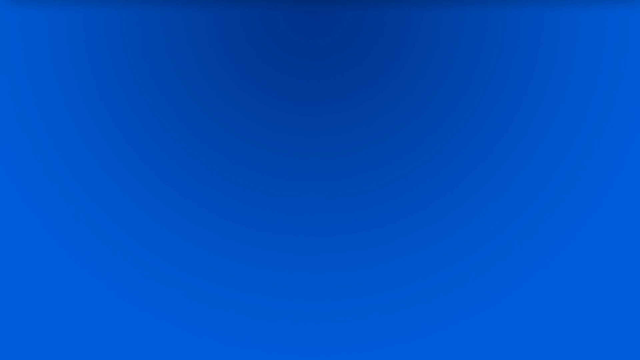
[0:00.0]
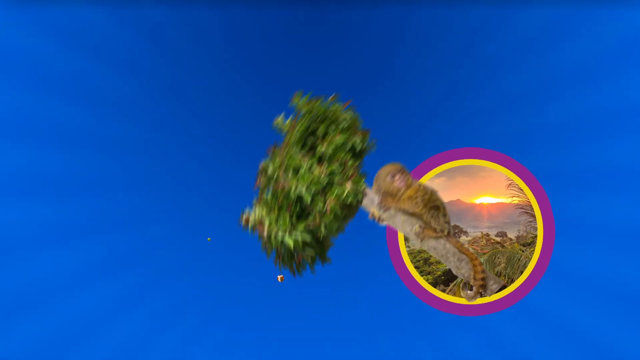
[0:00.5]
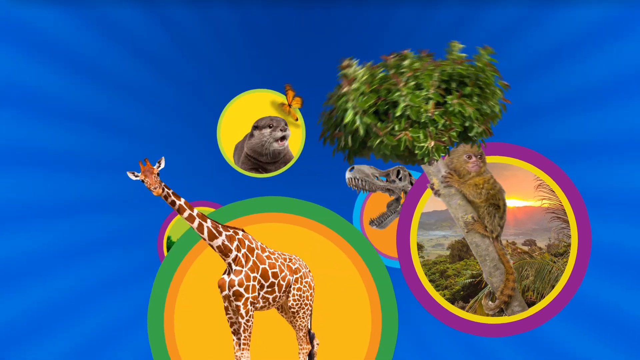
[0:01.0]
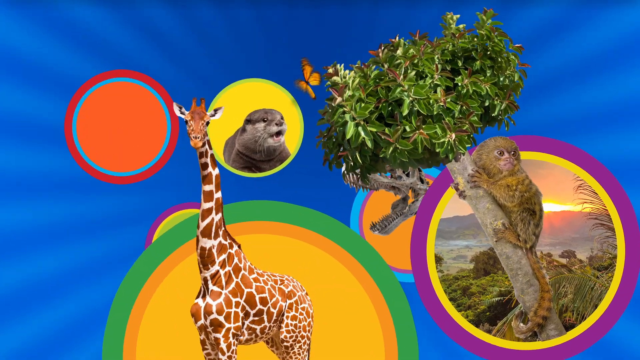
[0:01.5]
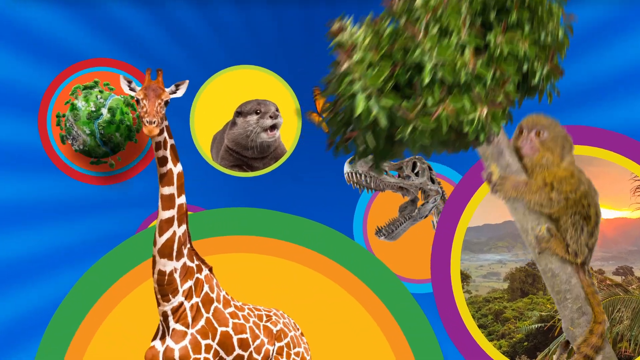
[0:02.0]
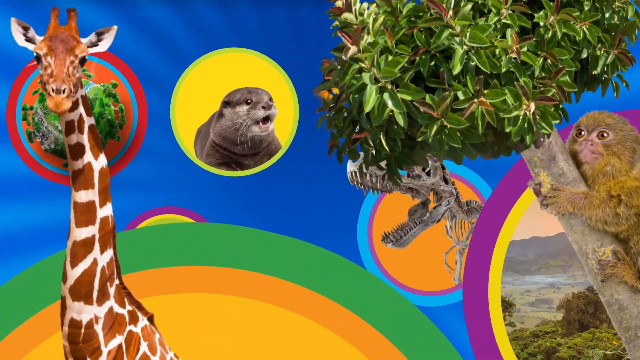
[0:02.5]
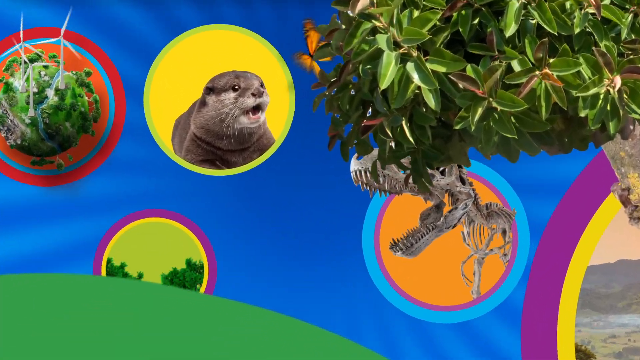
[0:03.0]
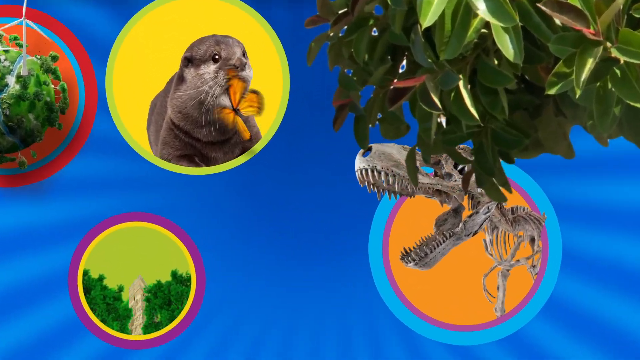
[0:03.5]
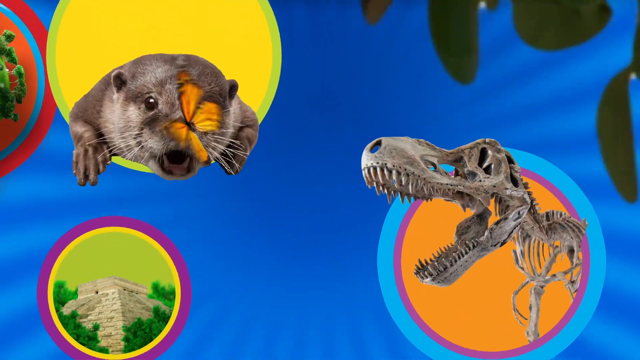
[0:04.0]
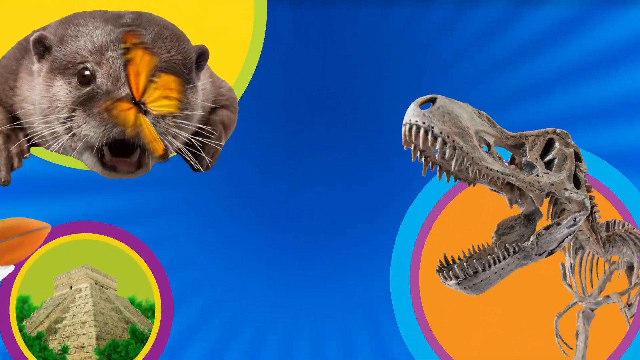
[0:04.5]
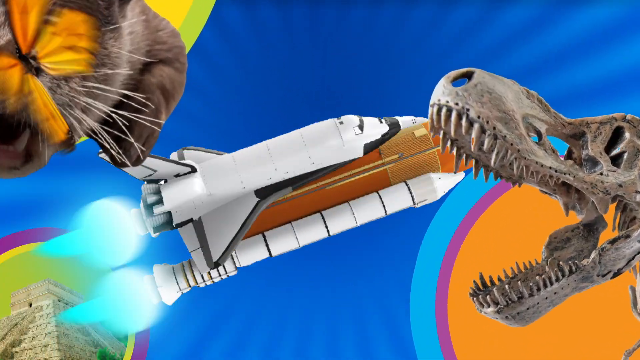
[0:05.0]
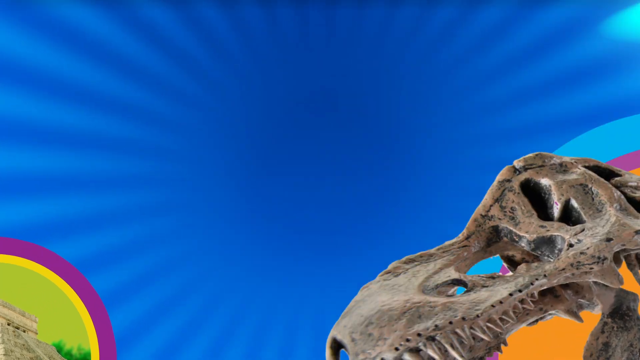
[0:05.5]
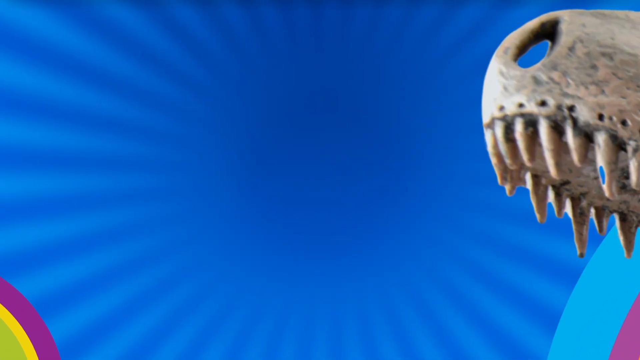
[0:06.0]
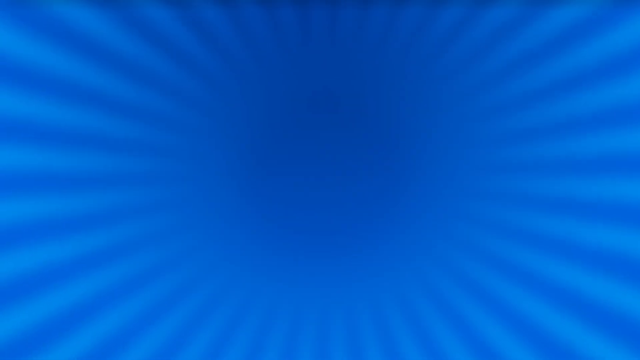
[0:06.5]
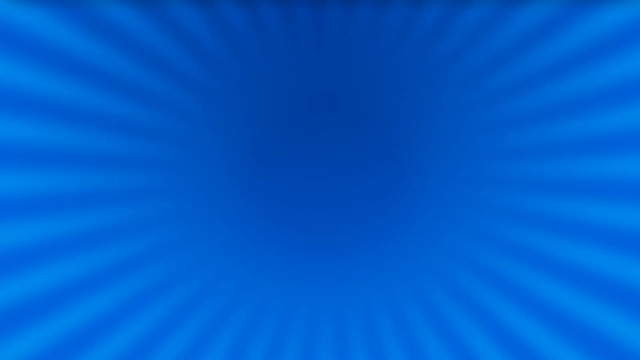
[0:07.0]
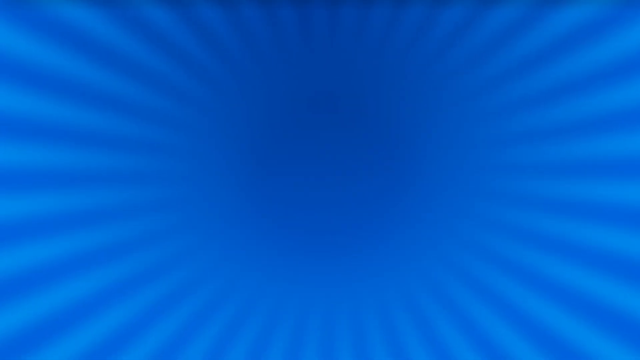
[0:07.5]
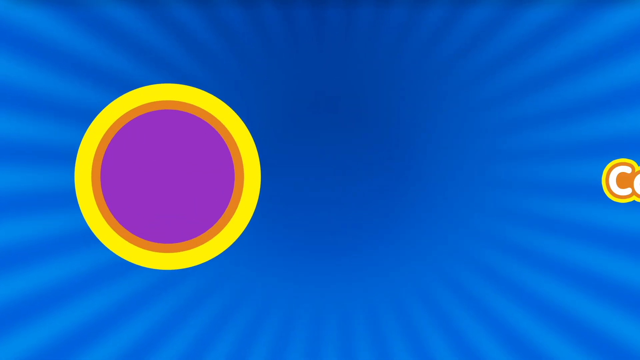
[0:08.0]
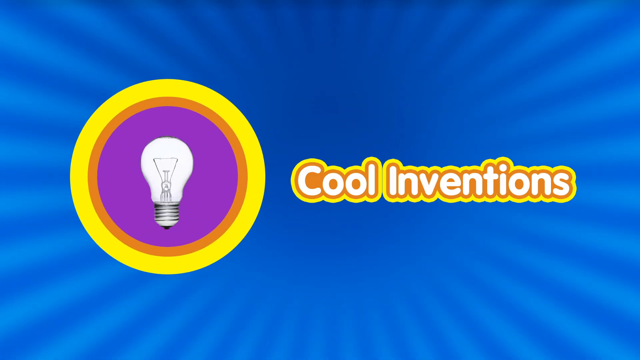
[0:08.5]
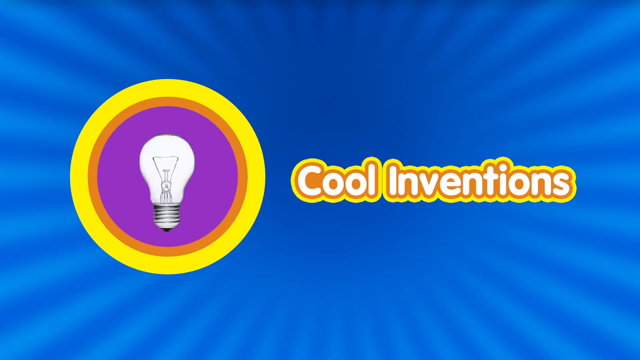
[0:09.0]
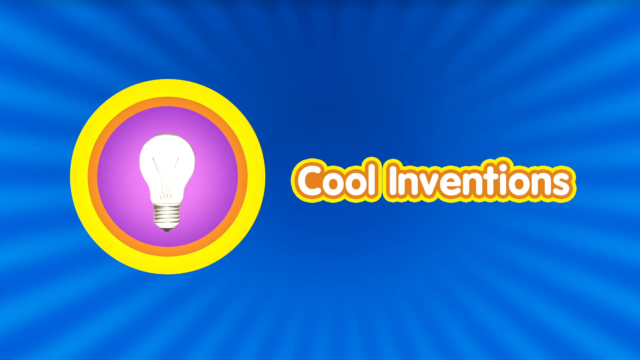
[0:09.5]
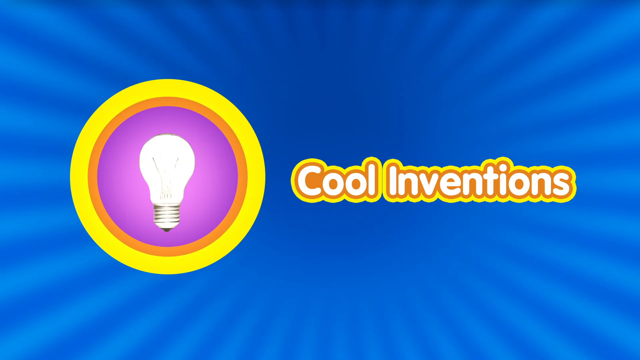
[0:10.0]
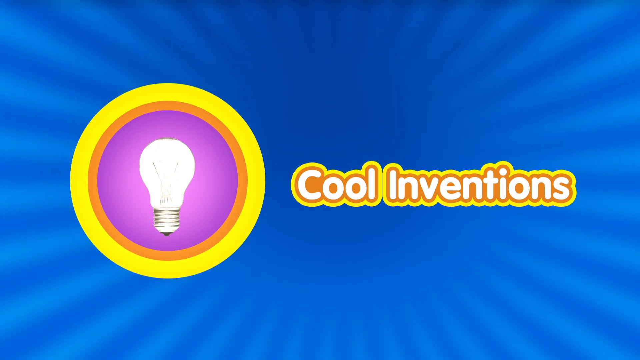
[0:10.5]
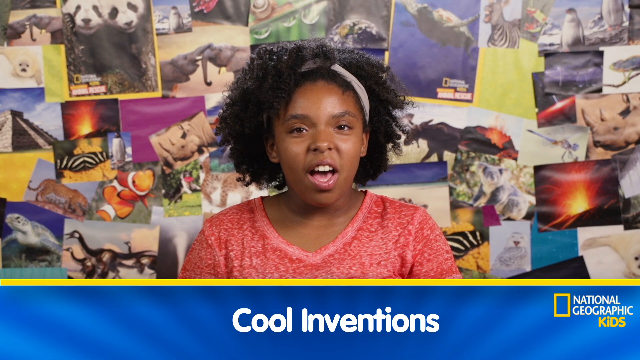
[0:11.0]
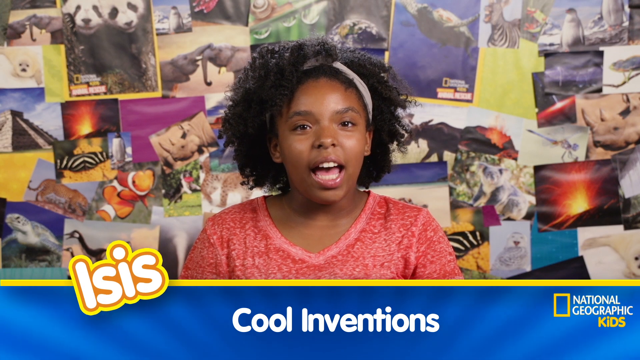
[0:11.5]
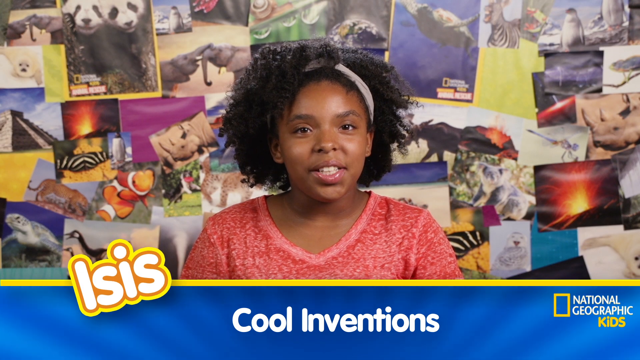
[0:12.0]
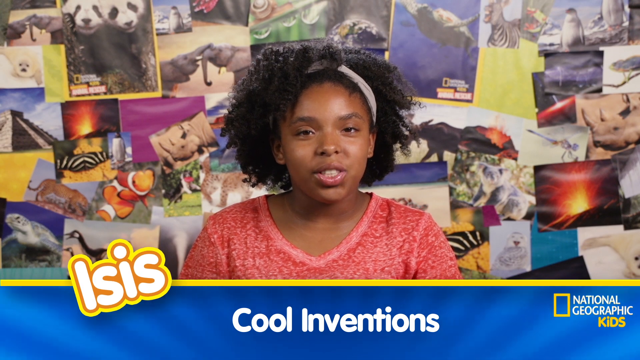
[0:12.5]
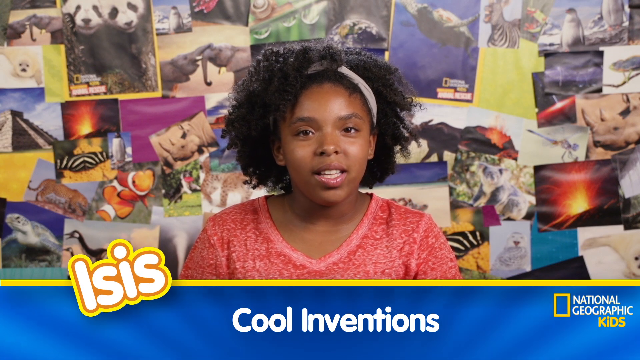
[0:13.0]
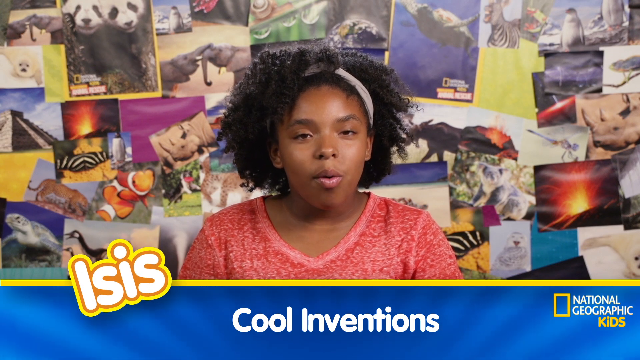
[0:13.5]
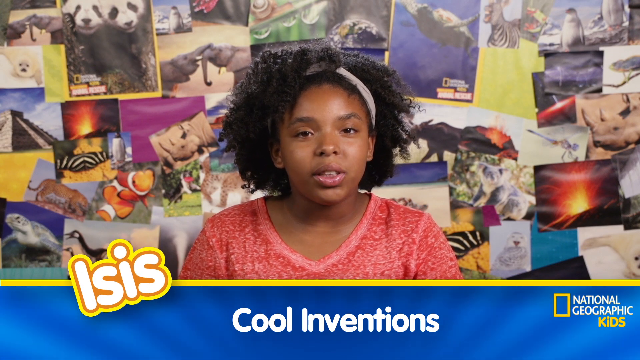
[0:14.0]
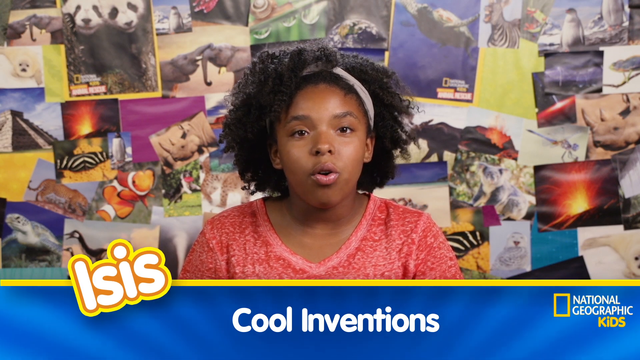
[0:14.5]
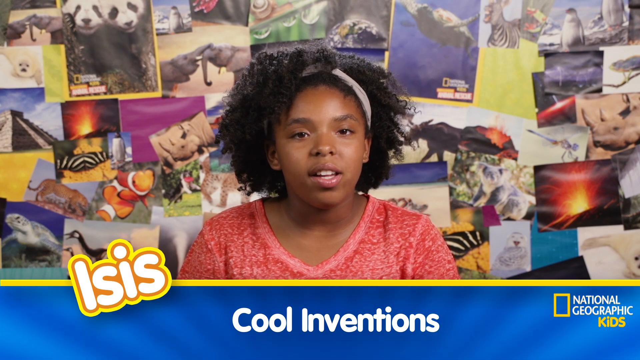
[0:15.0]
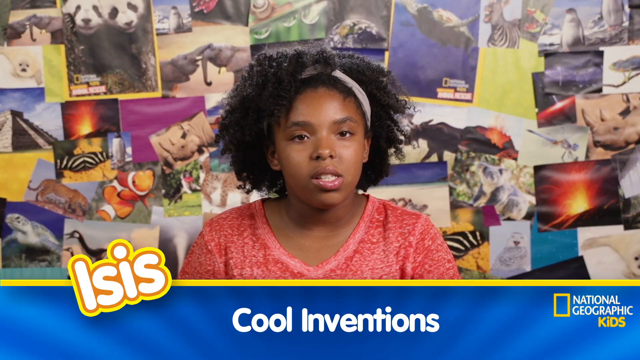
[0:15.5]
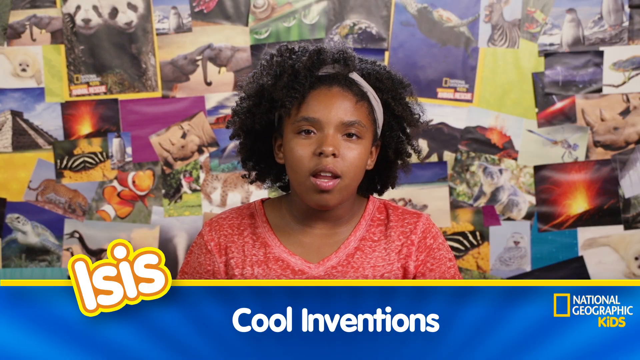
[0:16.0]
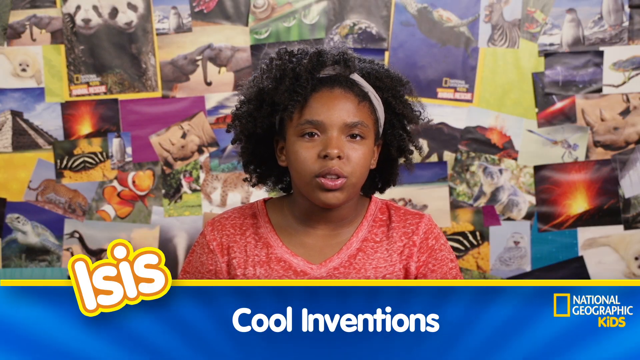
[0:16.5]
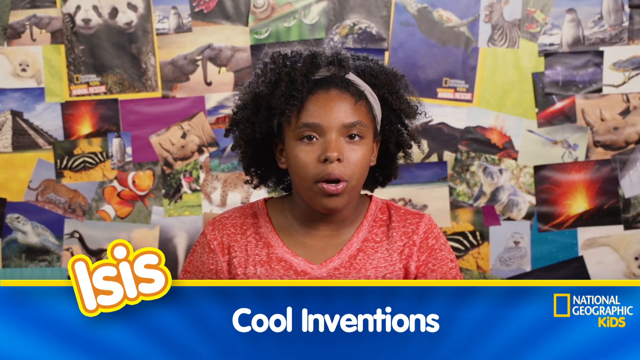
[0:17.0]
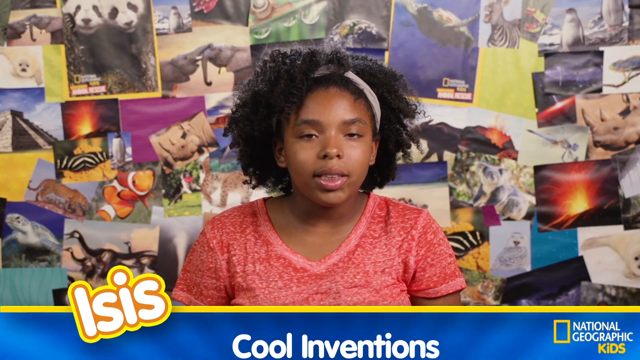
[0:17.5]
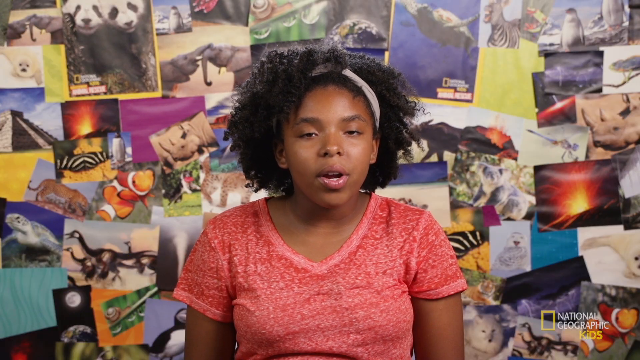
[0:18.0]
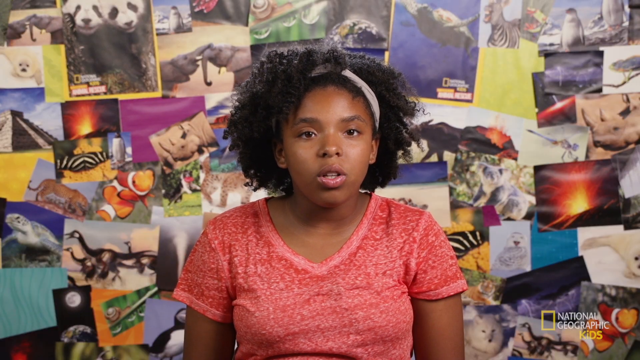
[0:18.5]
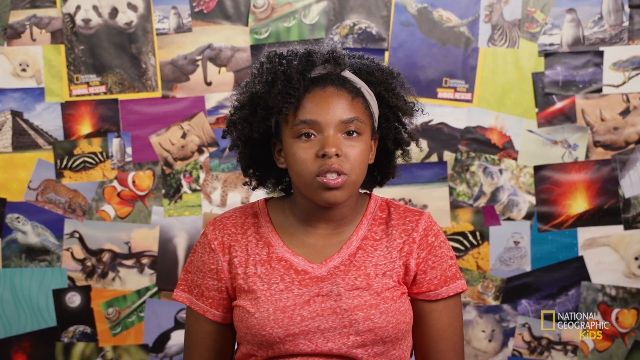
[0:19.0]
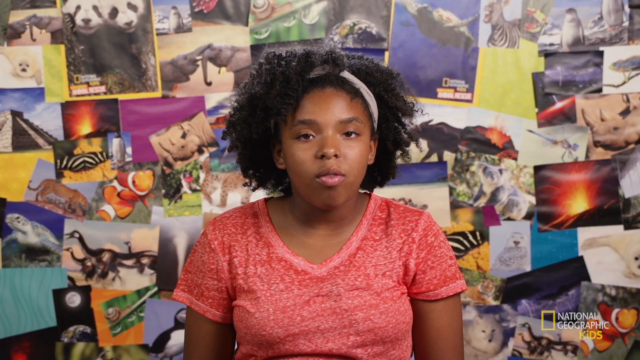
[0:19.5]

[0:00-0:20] The intro shows lots of animals, suggesting some kind of documentary or animal-related content. Against a blue background, the animals appear in different backgrounds, each one circular: a tree with an animal on it, dinosaur fossils, some wind turbines, a forest, some pyramids and a rocket. After these are removed from the screen, text appears on the blue background, white inside the letters with orange and yellow outlines. On the left is a lit light bulb surrounded by a purple, an orange and a yellow ring, the logo of the channel uploading the video. The video then cuts to a woman named Isis, a black woman with black curly hair, wearing a red shirt and a white band in her hair, who talks to the camera.